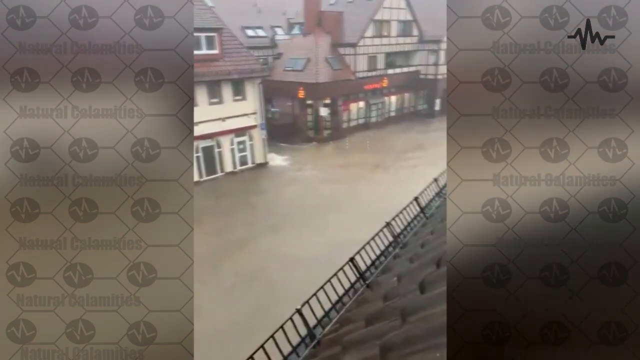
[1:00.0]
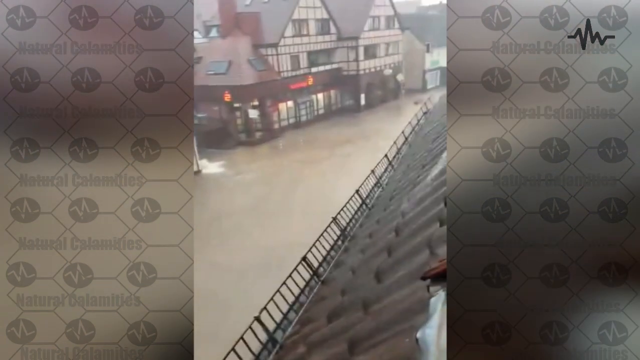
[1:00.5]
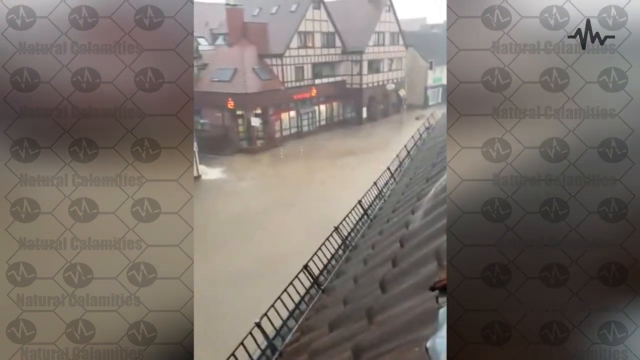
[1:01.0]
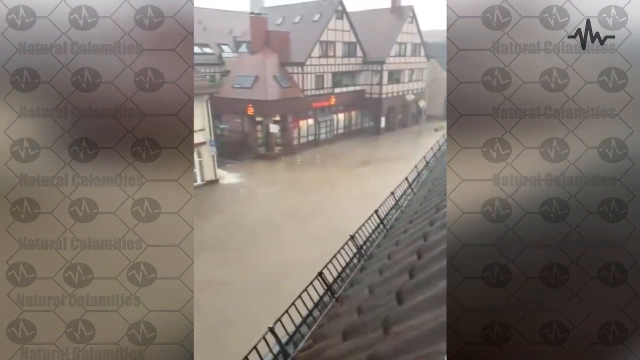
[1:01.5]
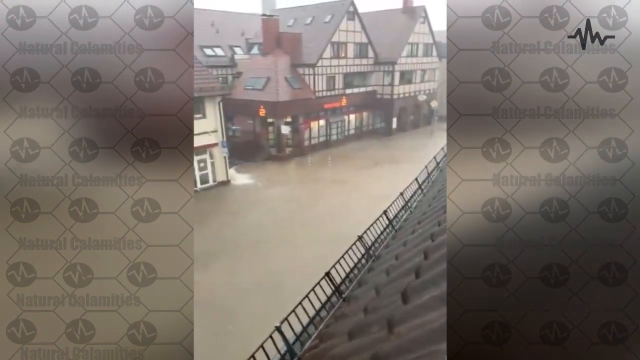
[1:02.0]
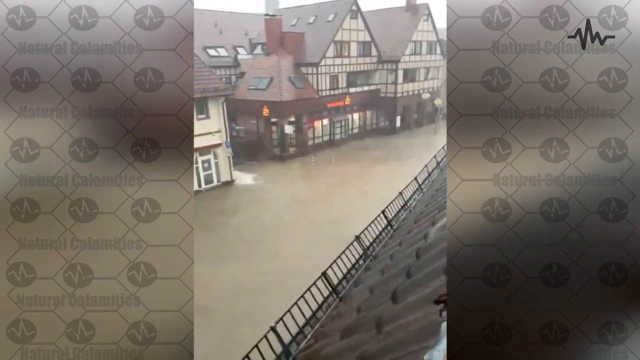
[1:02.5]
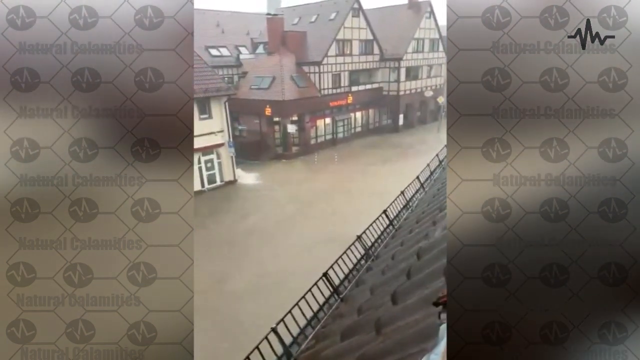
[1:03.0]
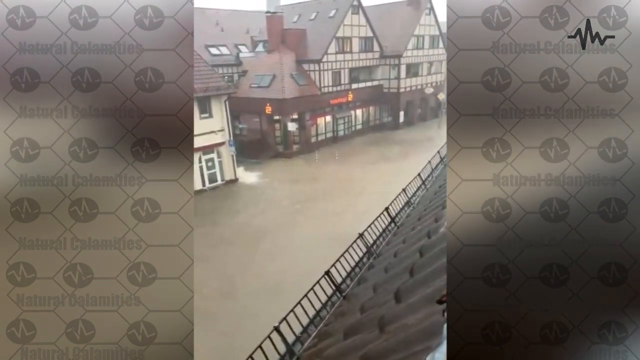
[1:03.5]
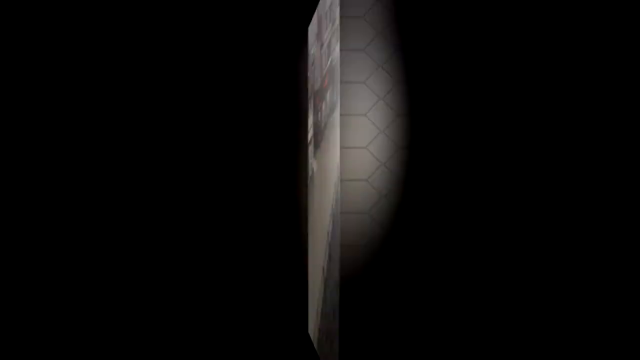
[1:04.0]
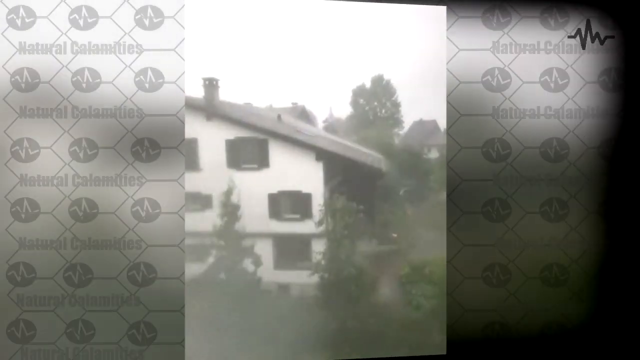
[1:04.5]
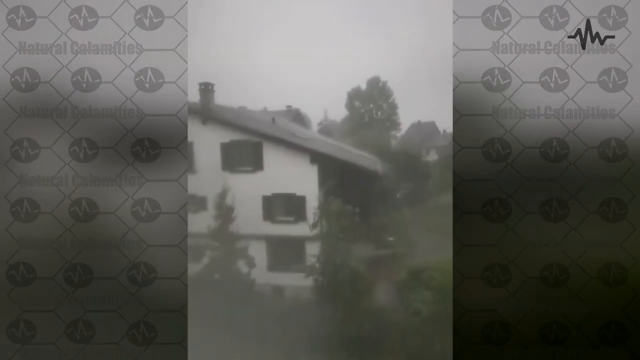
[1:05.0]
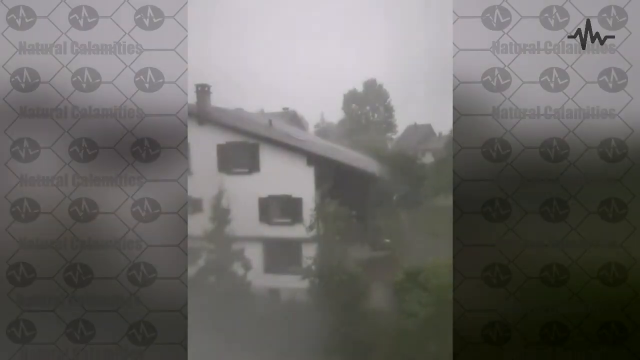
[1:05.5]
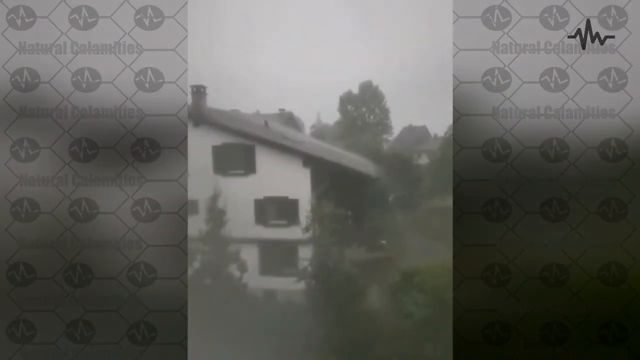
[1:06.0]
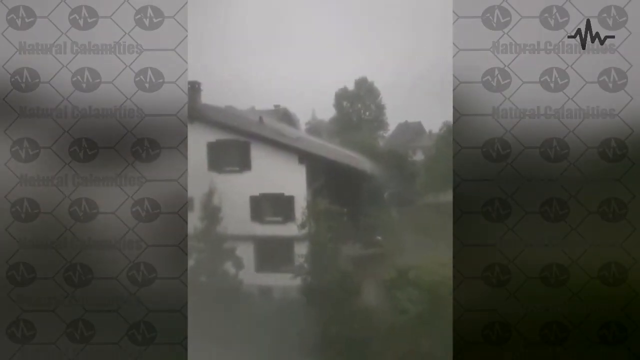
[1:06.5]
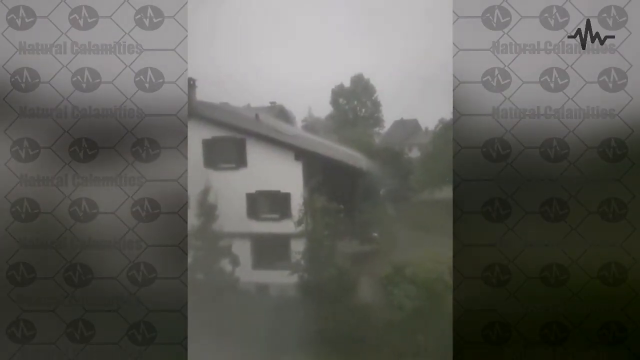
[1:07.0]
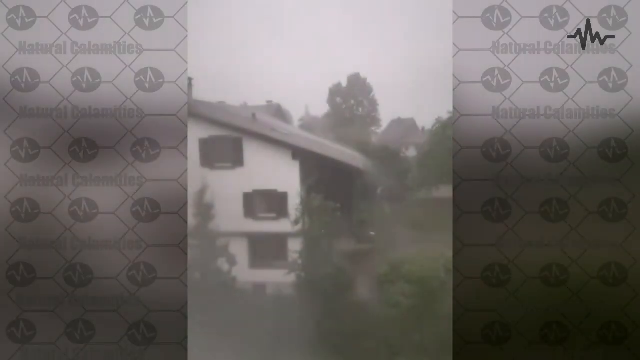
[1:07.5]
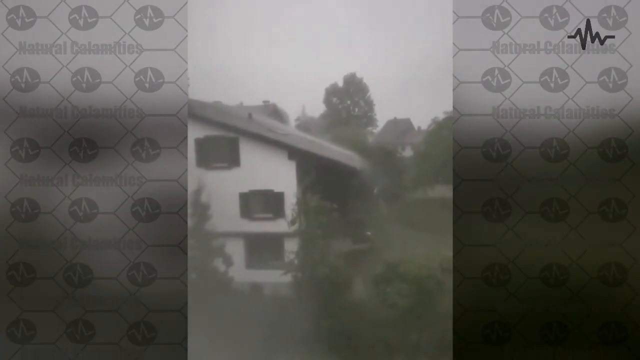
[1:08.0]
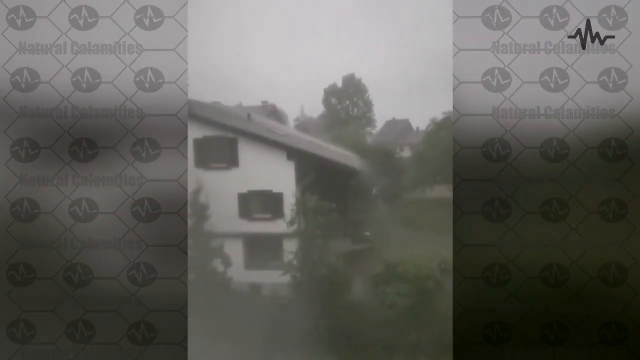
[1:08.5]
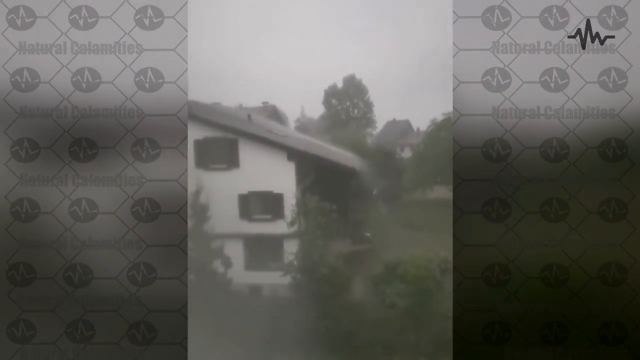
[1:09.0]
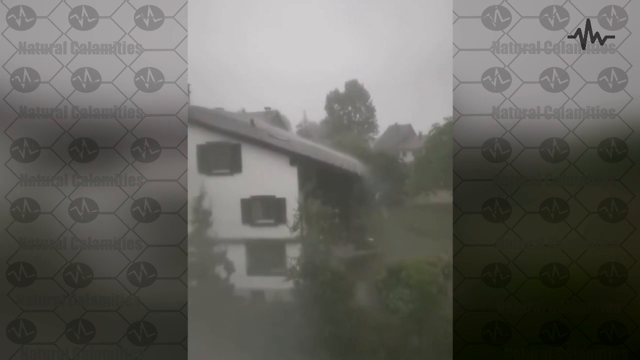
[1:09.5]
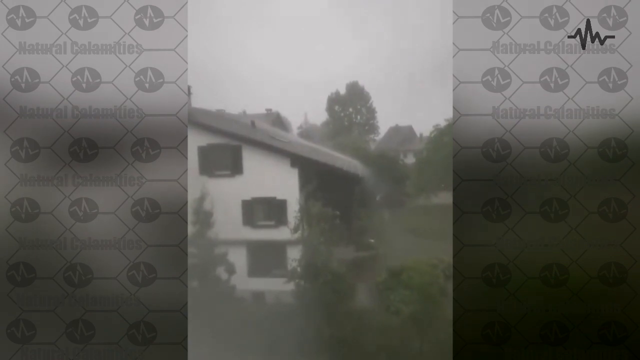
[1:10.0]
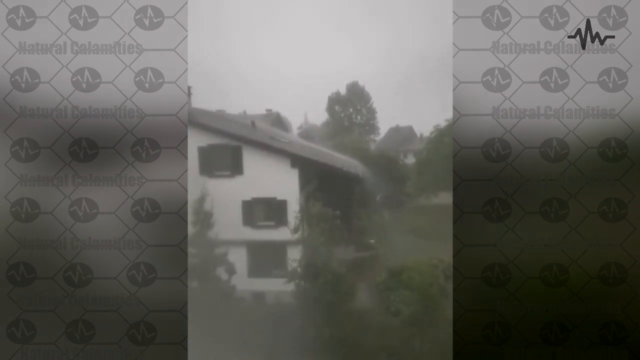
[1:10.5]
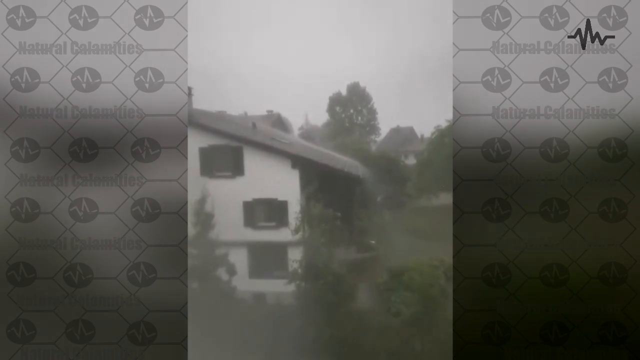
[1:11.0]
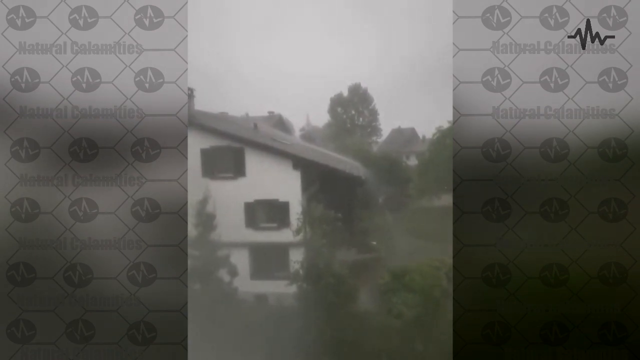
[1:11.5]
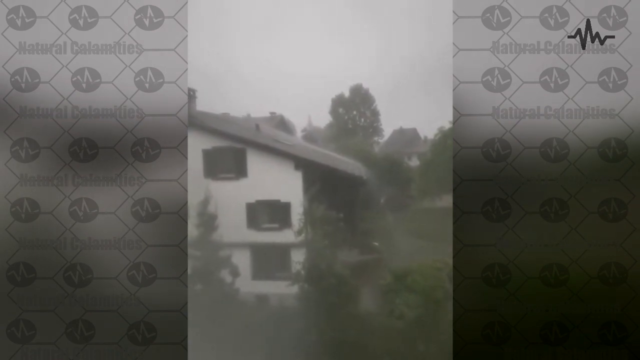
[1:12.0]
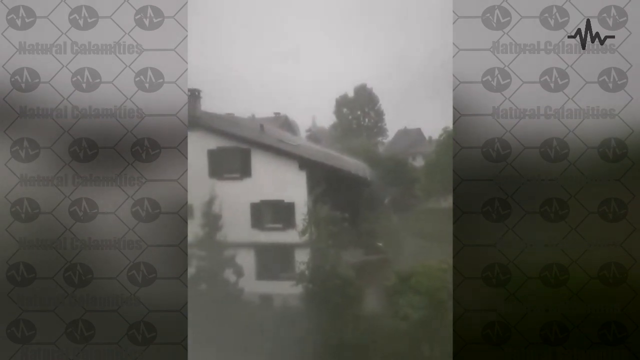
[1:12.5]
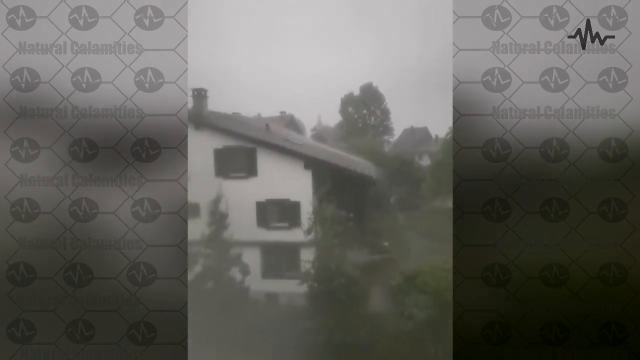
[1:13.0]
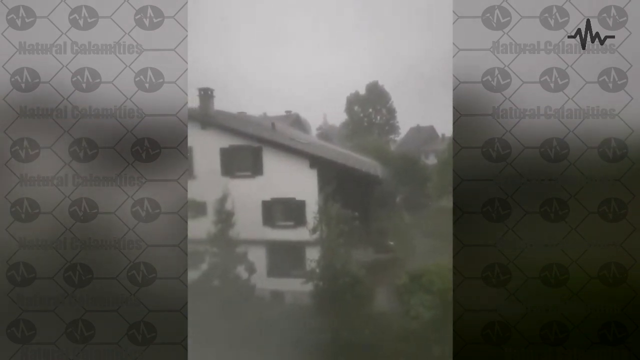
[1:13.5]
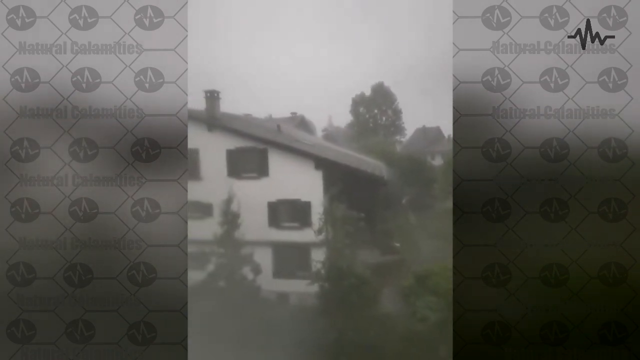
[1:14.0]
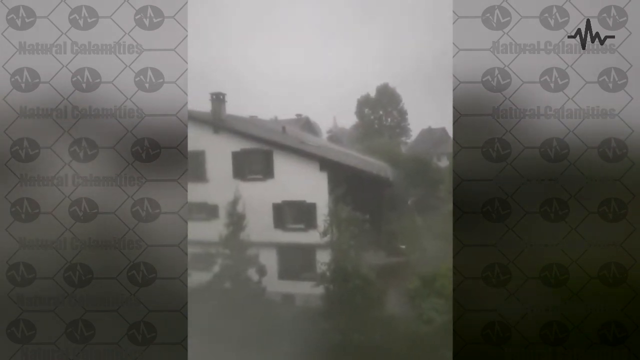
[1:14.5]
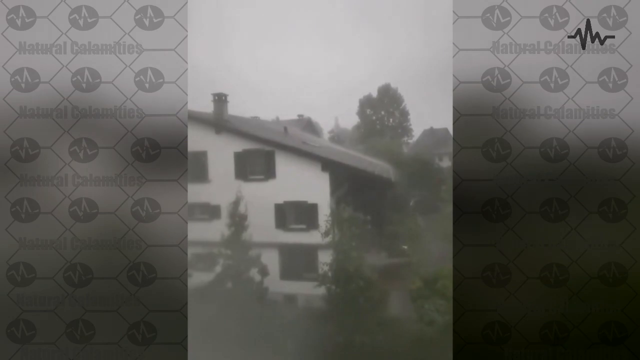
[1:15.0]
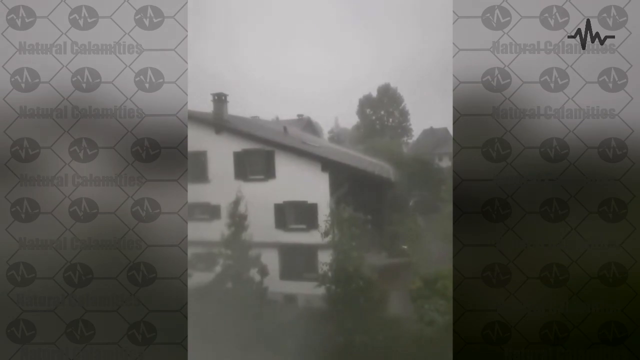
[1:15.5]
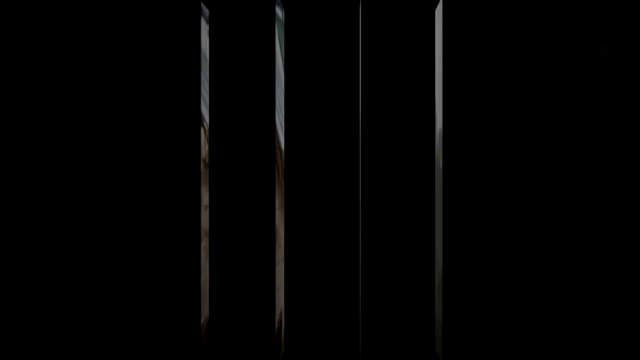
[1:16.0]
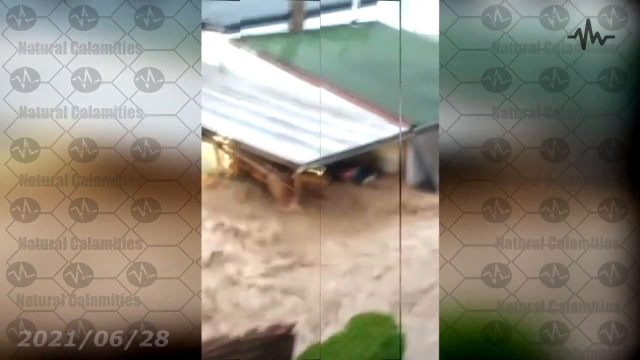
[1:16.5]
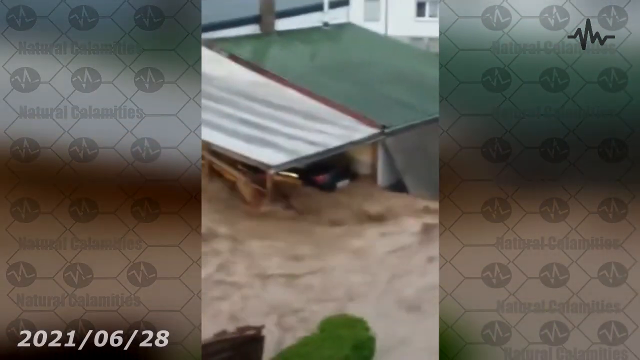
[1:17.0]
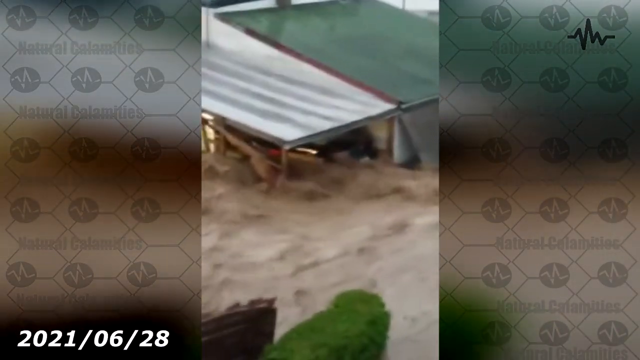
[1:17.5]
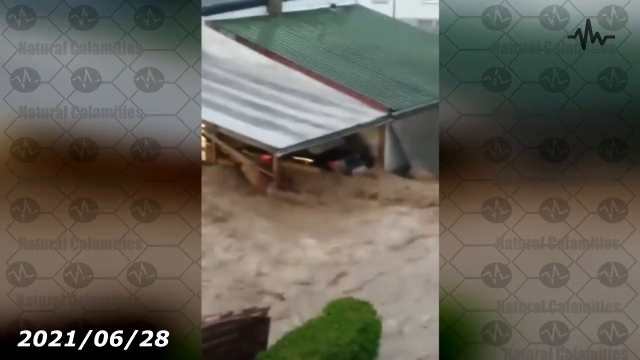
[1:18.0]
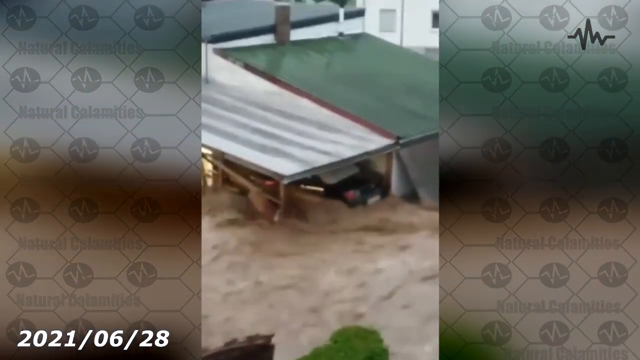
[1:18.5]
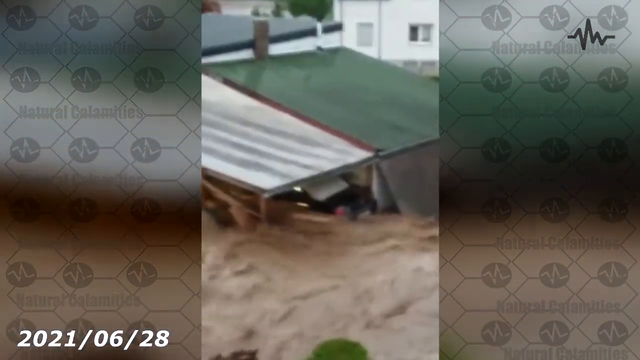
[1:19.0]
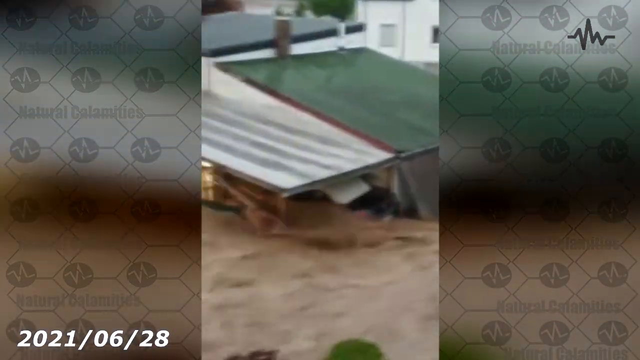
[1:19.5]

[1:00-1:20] The powerful flood seems to be coming from a steep place. People on bicycles cycle through the water, and cars like Land Rovers drive through the dirty, rubble-filled floodwater.